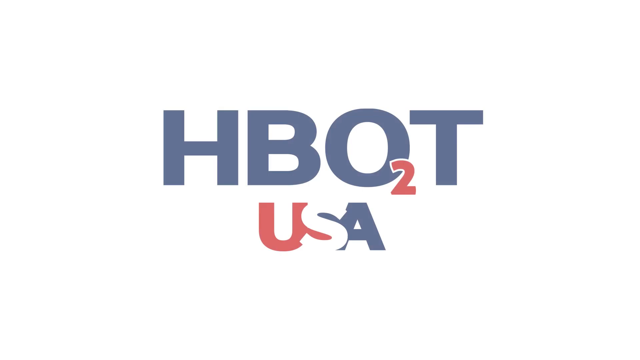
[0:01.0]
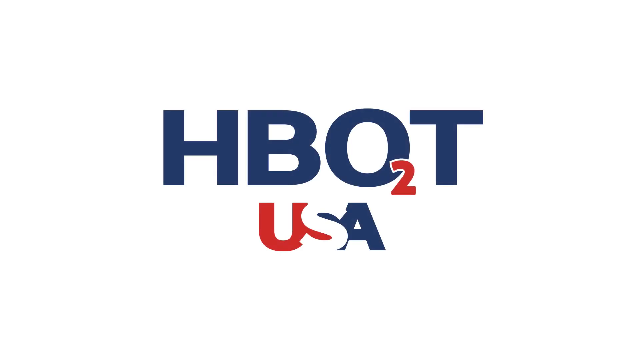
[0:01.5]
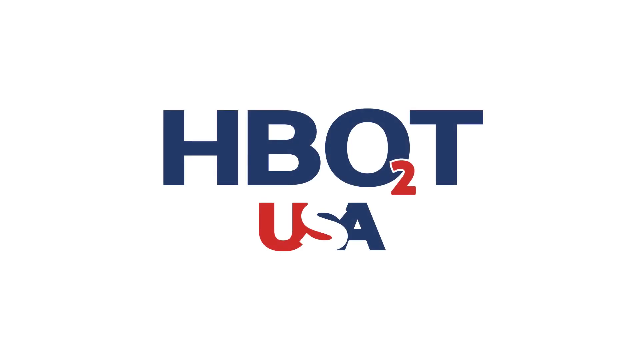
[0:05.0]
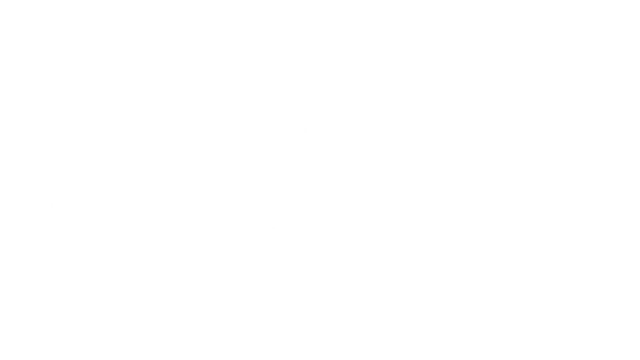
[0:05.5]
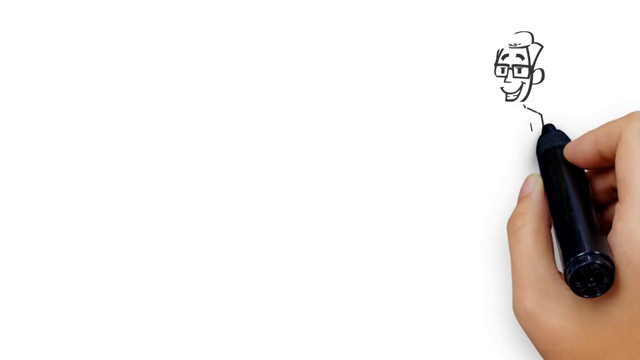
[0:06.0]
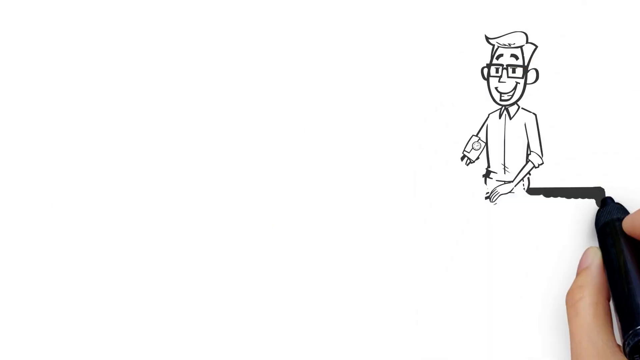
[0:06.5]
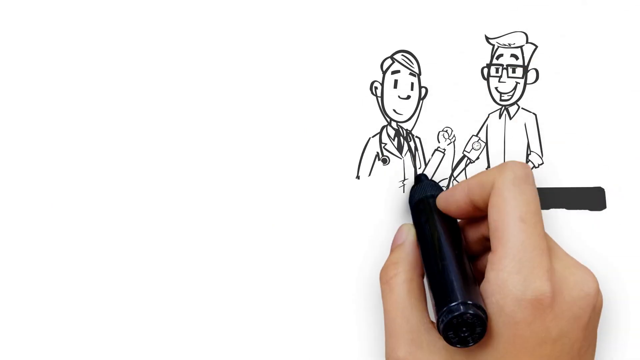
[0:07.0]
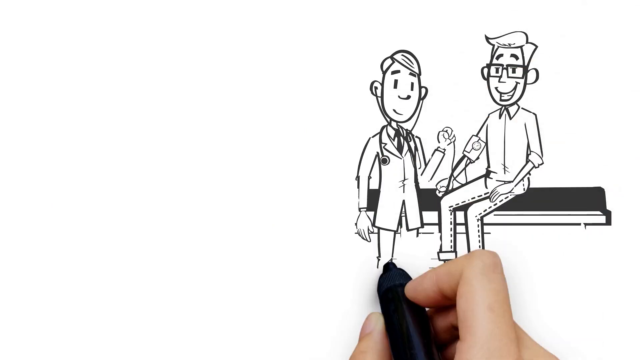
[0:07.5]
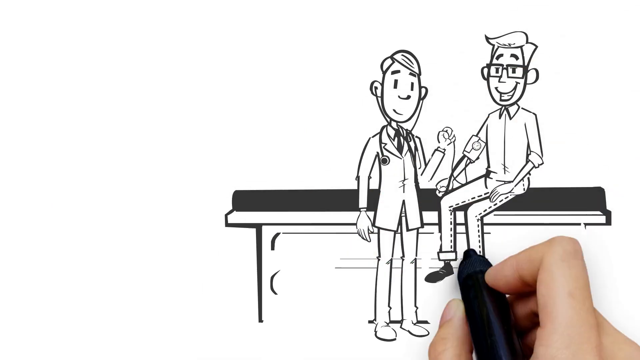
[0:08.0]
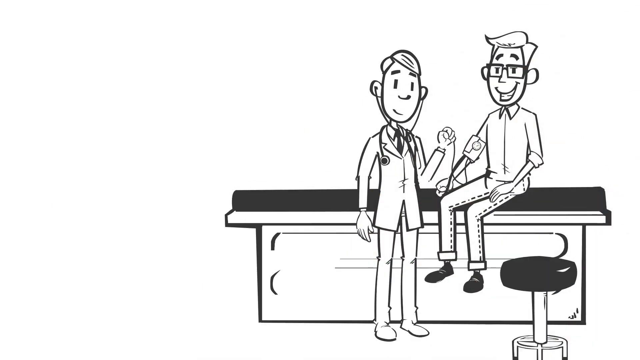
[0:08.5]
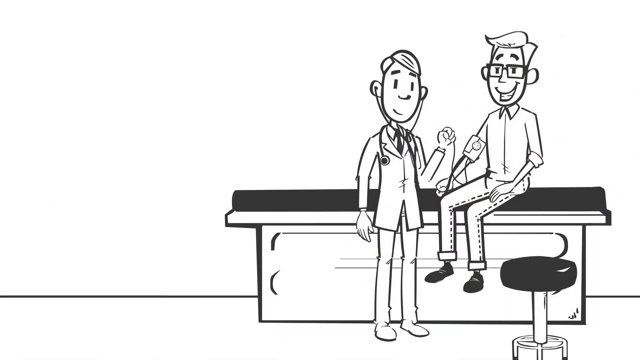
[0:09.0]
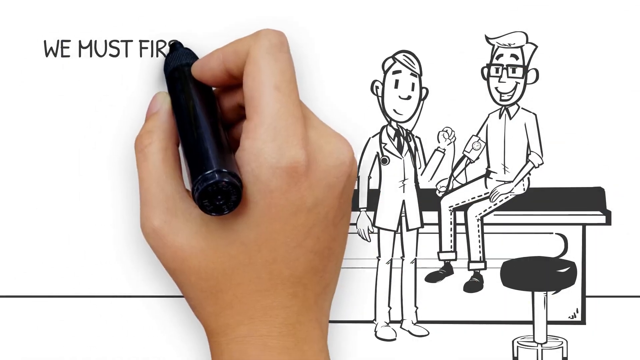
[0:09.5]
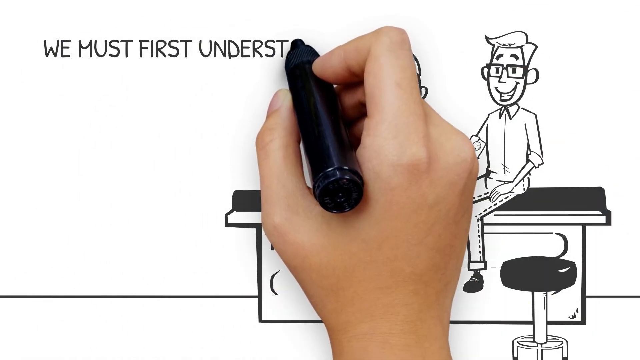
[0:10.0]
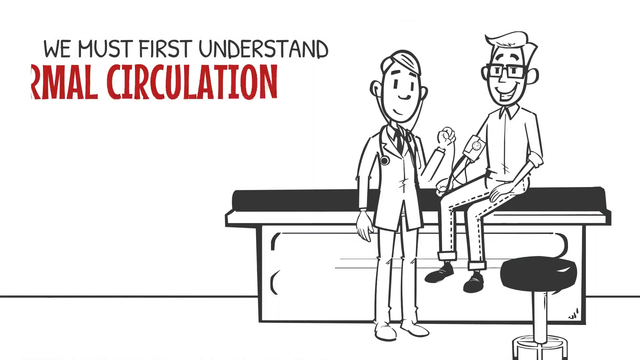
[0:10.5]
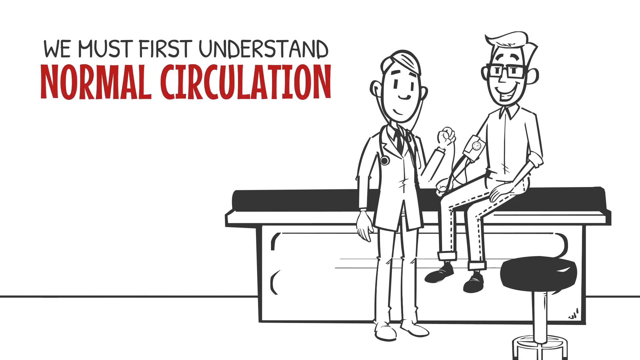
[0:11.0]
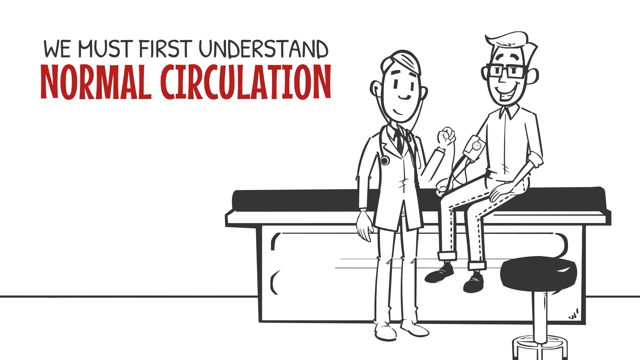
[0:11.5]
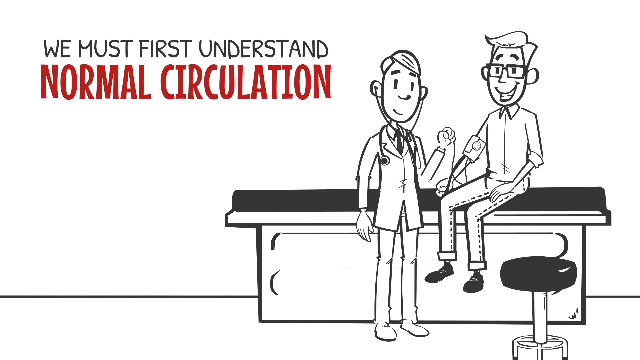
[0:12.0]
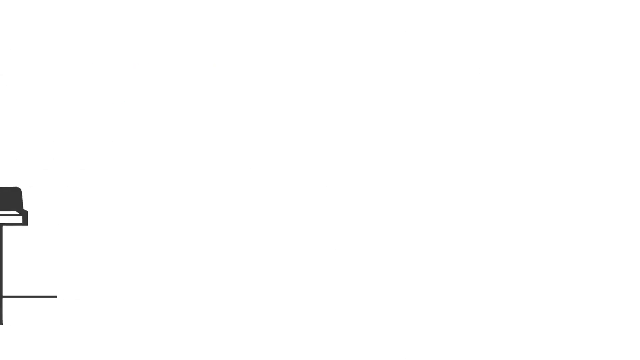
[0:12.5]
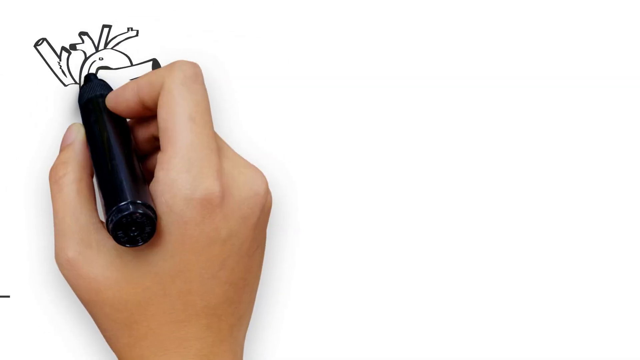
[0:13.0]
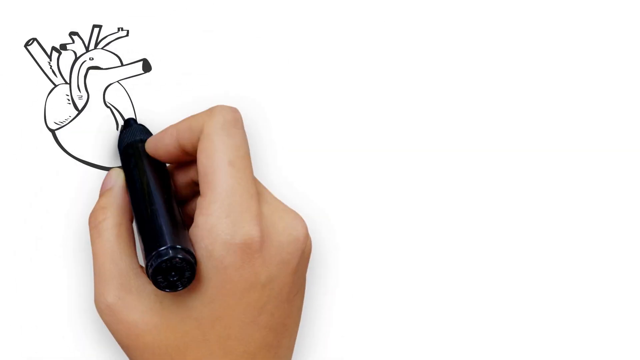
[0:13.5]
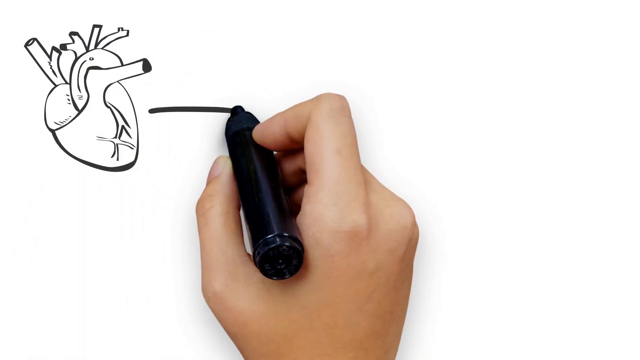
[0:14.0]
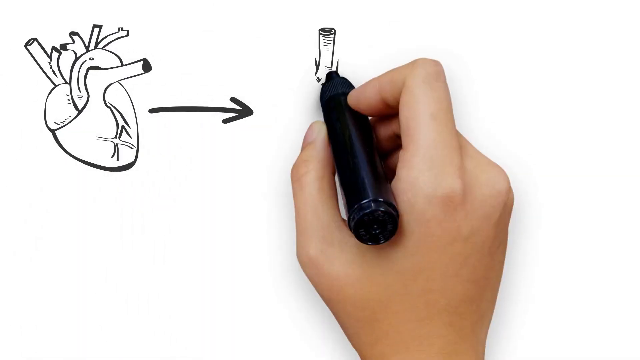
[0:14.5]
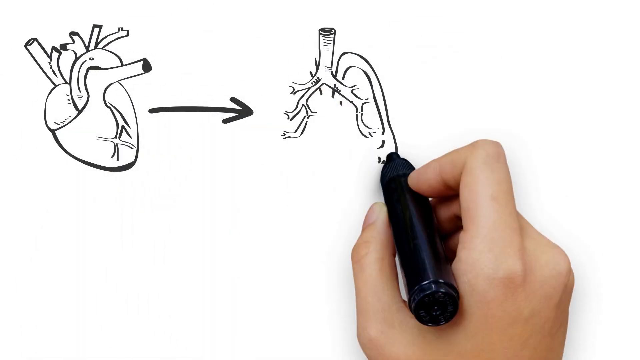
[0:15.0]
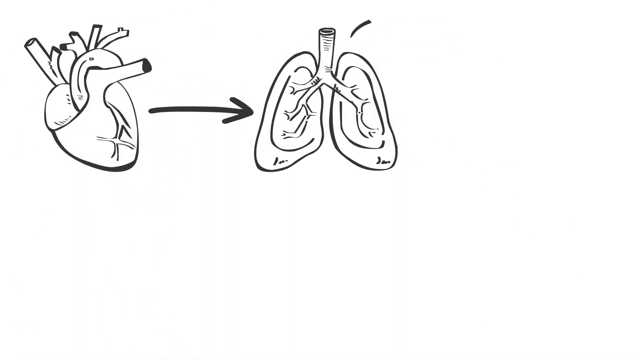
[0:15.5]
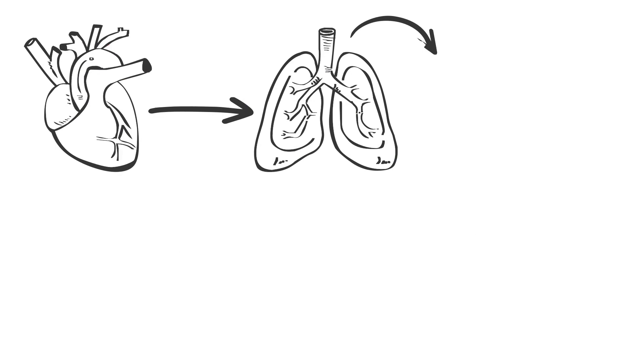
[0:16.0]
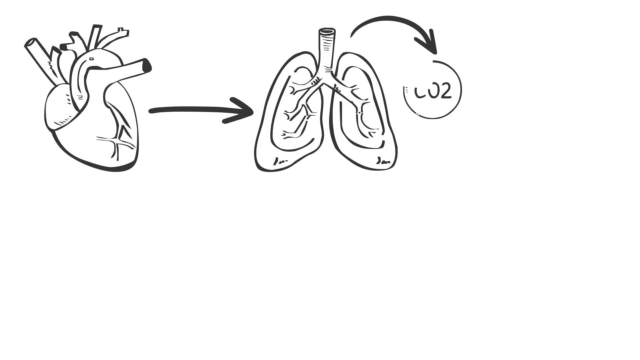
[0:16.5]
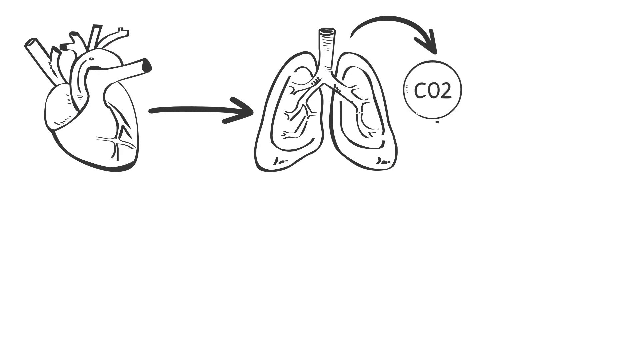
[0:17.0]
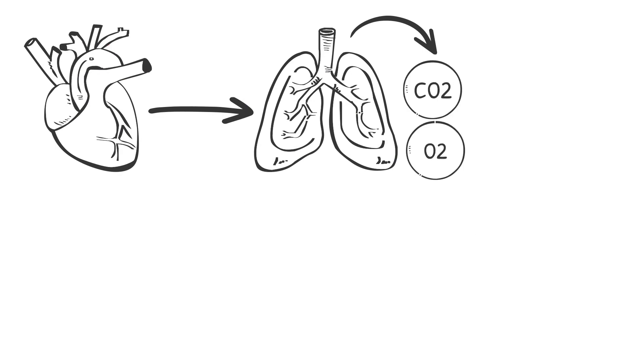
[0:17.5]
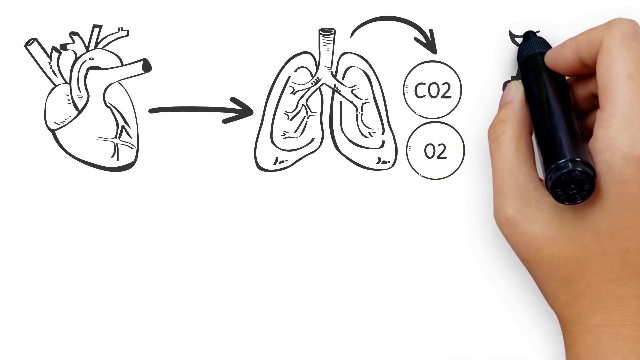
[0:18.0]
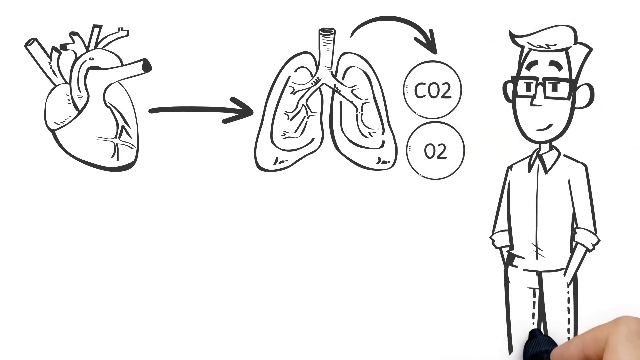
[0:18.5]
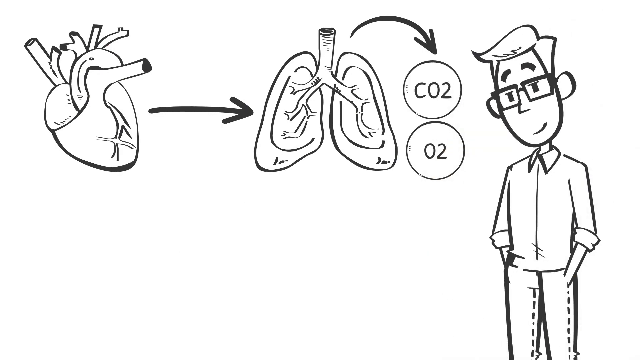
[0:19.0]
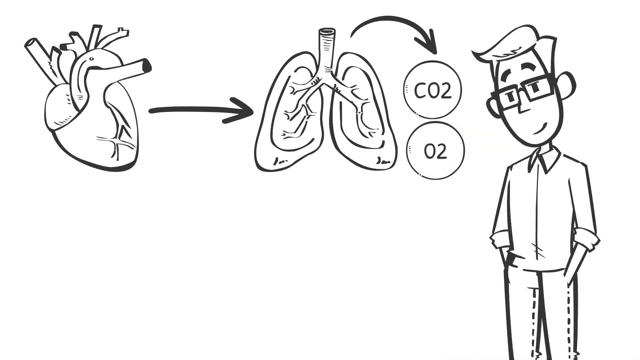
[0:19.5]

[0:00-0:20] The video opens with H-Bot in black. Someone draws cartoons on top of a desk in what looks like a doctor's office. A heart is drawn with an arrow over to some lungs, labeled "CO2 O2." "HBOT 2 USA" appears at the bottom: HBOT is written in capitalized blue letters with the number 2 in red, and USA is in flag colors. A hand with a black marker draws a doctor and a patient. The doctor has a stethoscope around his neck. The patient, who wears glasses, is sitting on a countertop, and there is a little stool next to the desk. The text "We must first understand normal circulation" appears. The drawing proceeds with a heart, then lungs, then the CO2 and O2 labels, and the patient on the right-hand side.